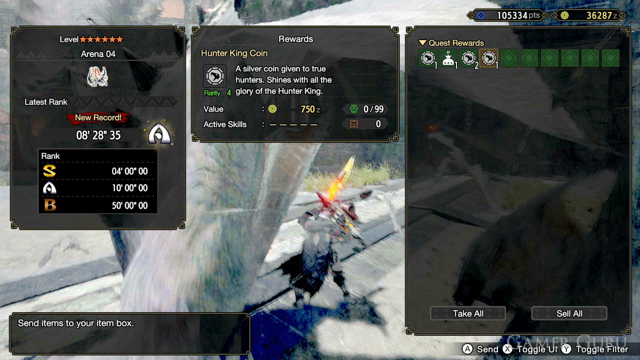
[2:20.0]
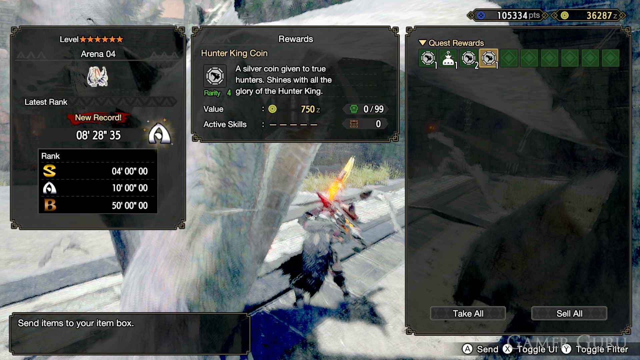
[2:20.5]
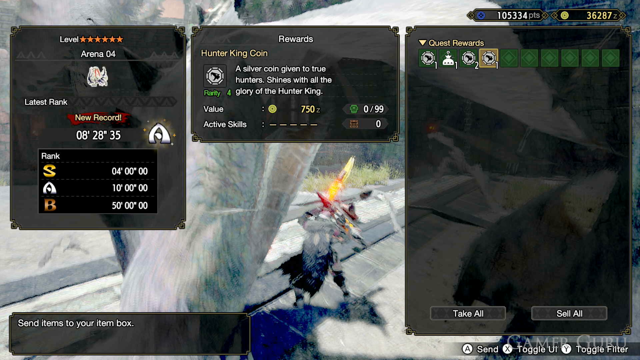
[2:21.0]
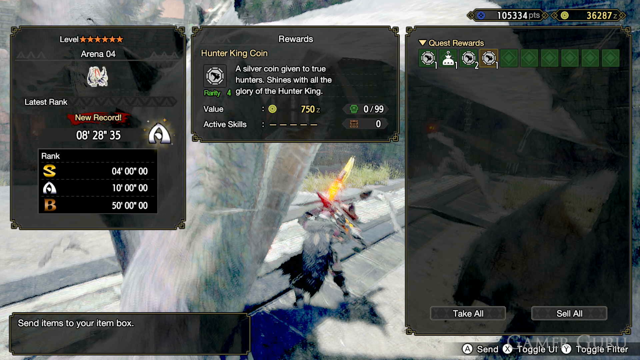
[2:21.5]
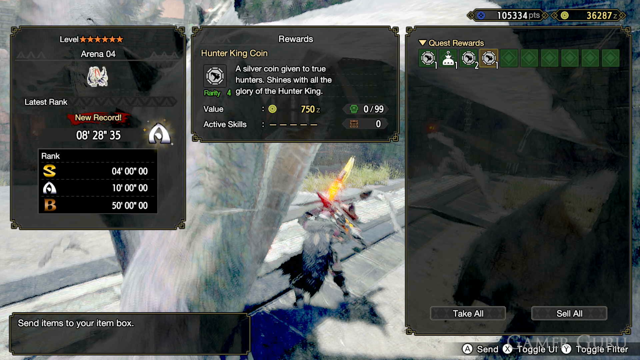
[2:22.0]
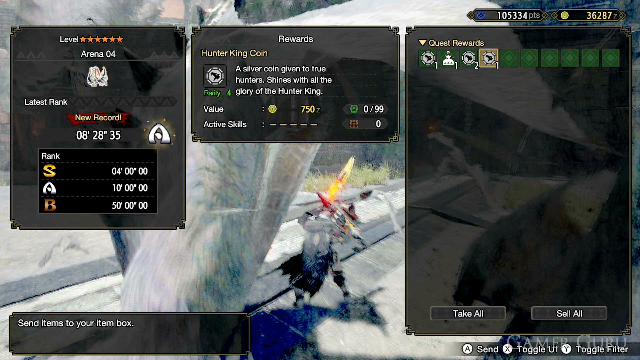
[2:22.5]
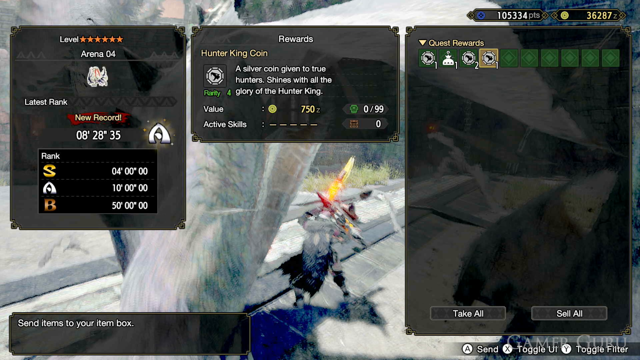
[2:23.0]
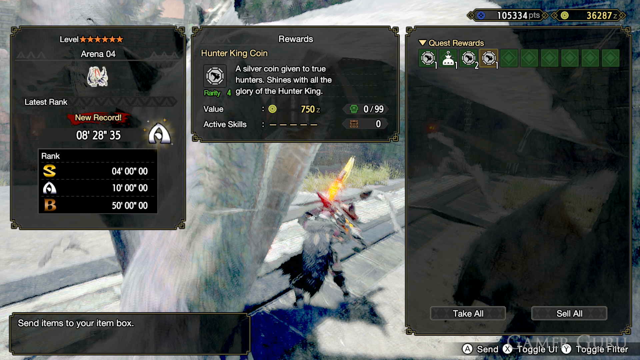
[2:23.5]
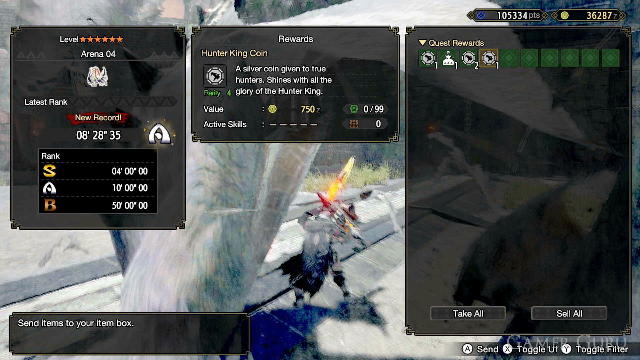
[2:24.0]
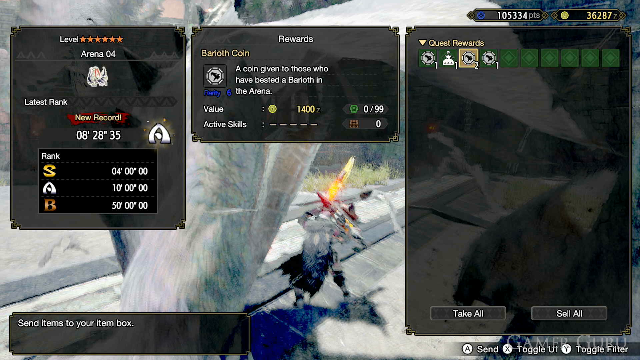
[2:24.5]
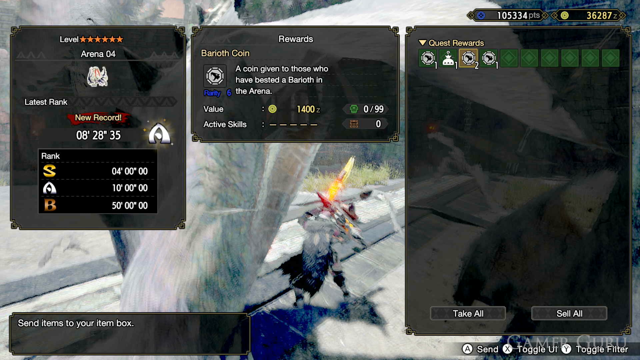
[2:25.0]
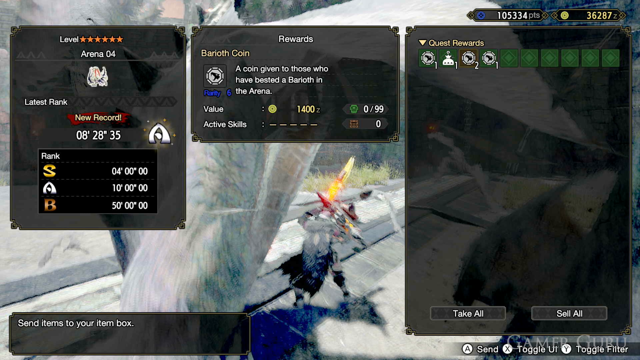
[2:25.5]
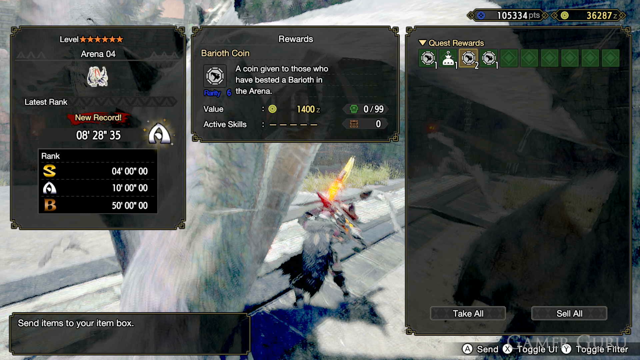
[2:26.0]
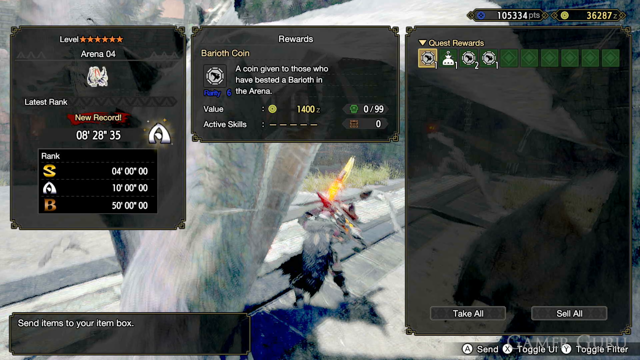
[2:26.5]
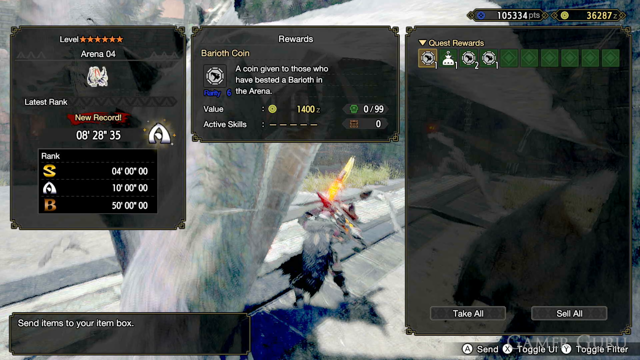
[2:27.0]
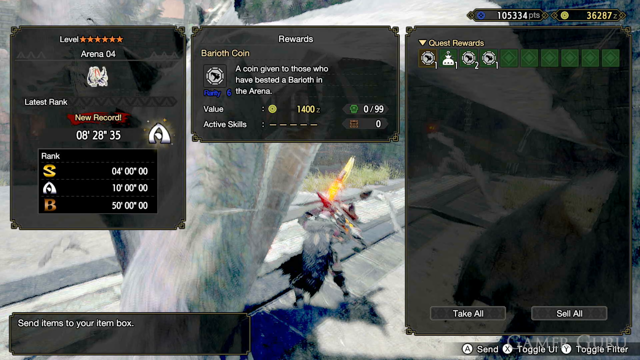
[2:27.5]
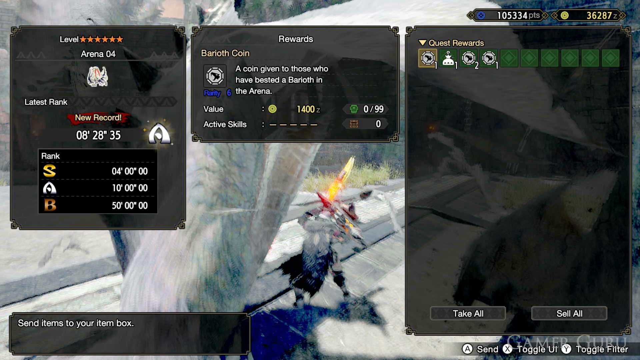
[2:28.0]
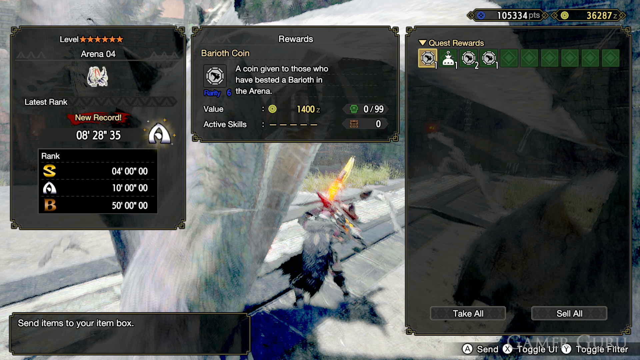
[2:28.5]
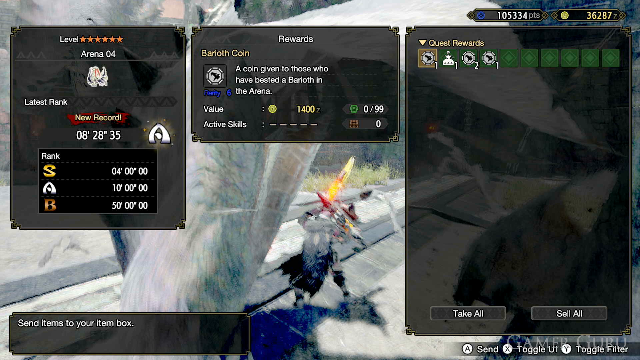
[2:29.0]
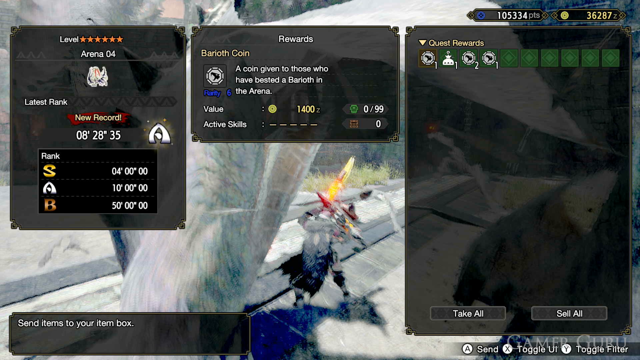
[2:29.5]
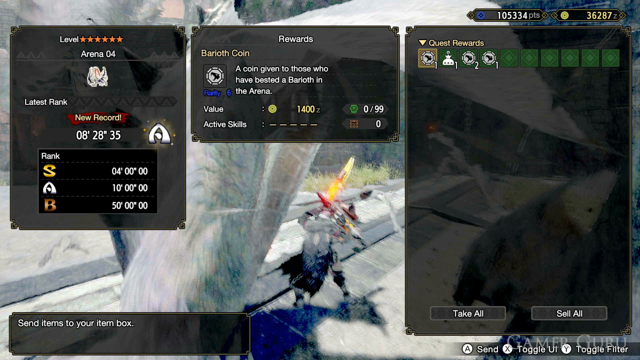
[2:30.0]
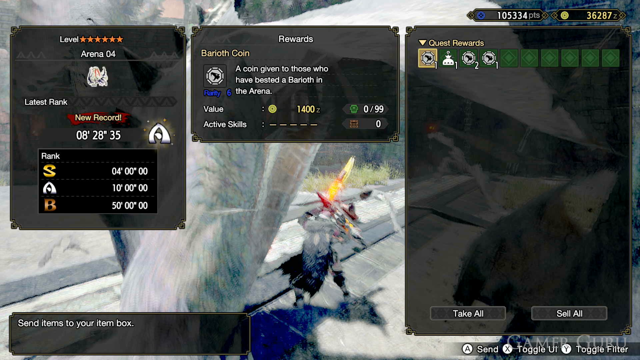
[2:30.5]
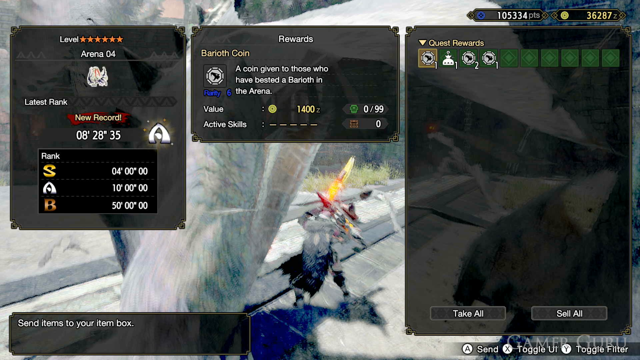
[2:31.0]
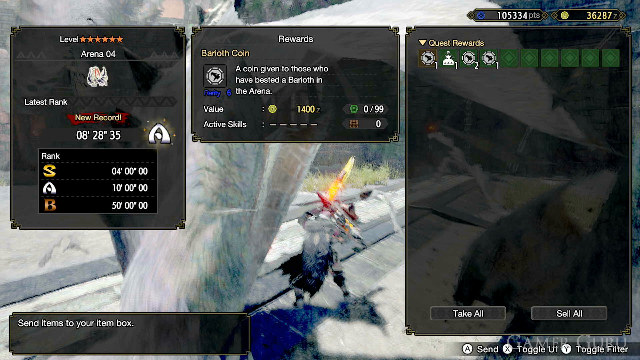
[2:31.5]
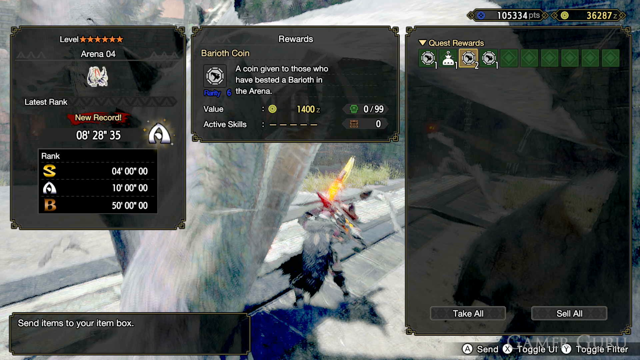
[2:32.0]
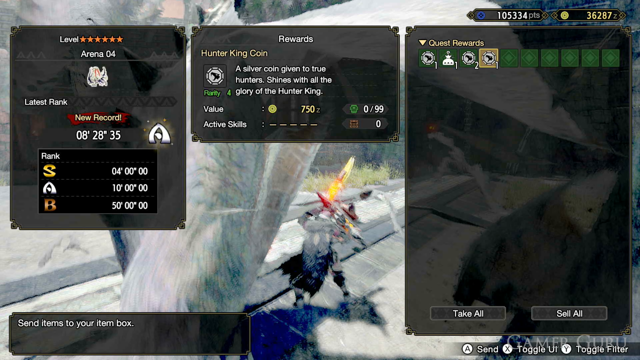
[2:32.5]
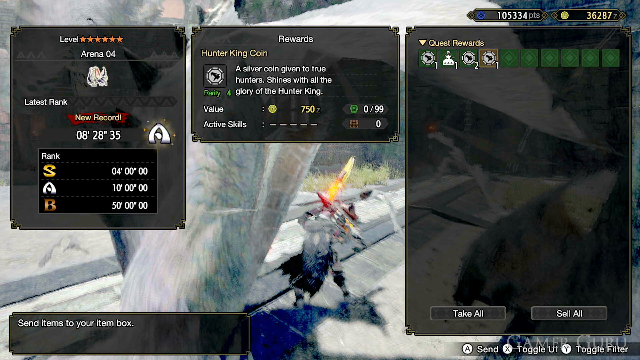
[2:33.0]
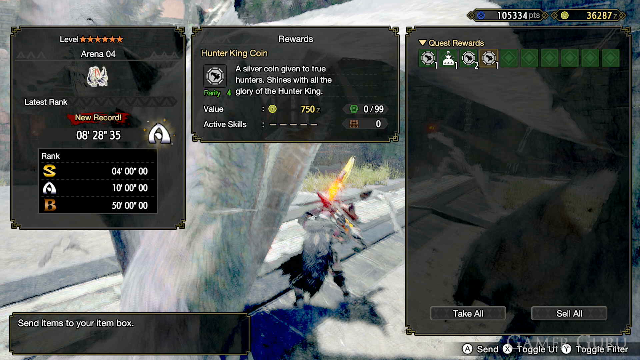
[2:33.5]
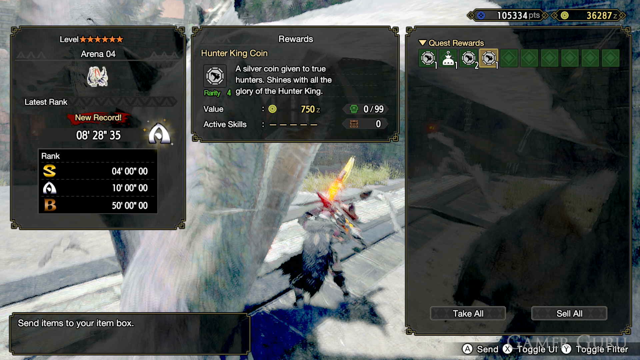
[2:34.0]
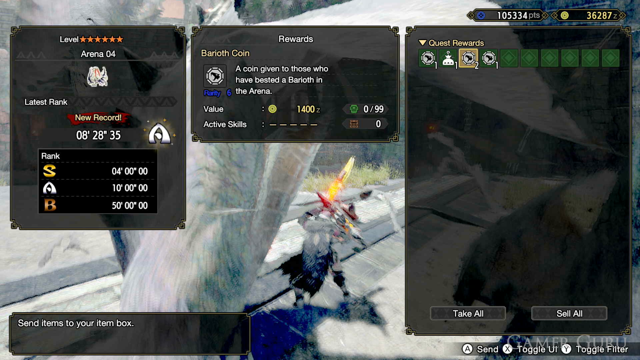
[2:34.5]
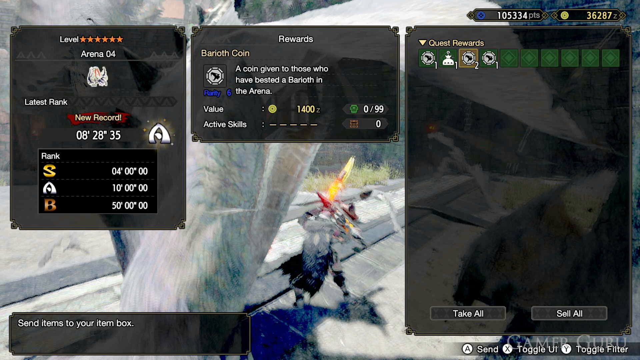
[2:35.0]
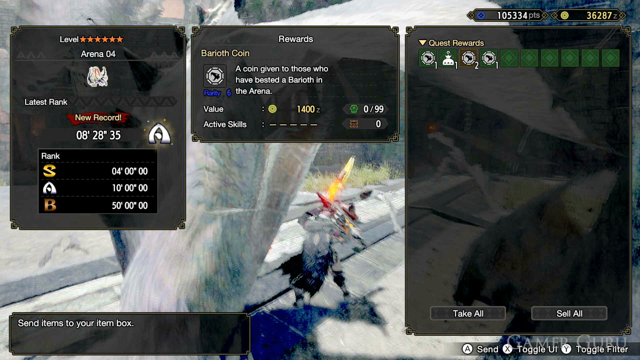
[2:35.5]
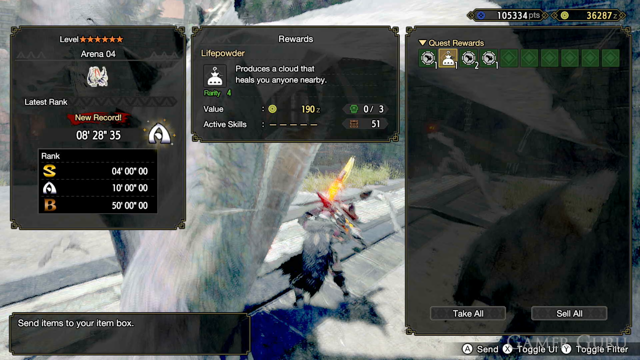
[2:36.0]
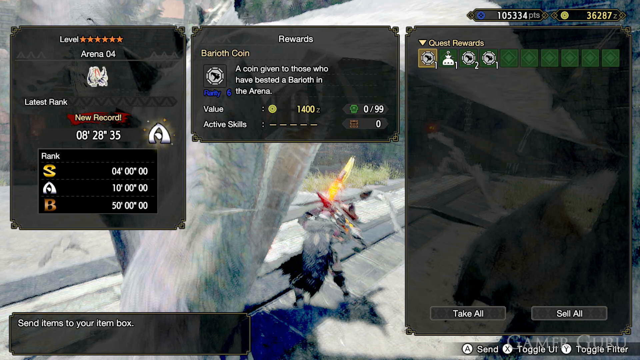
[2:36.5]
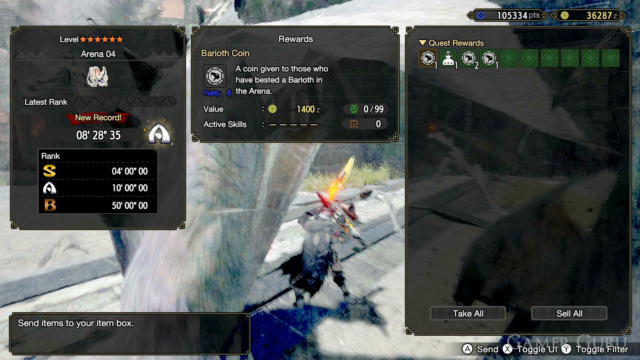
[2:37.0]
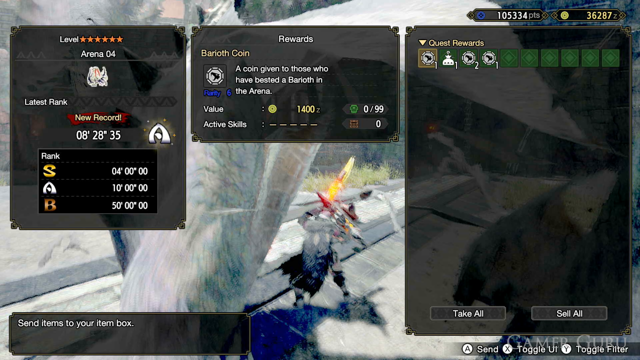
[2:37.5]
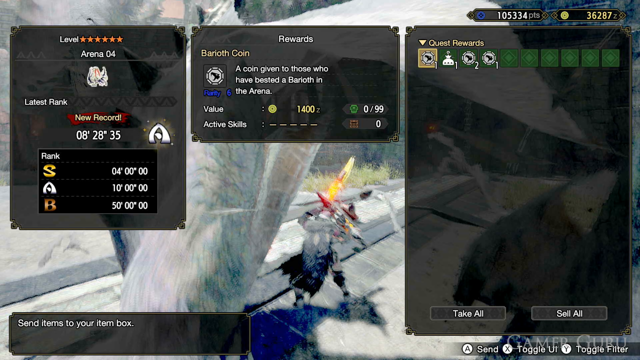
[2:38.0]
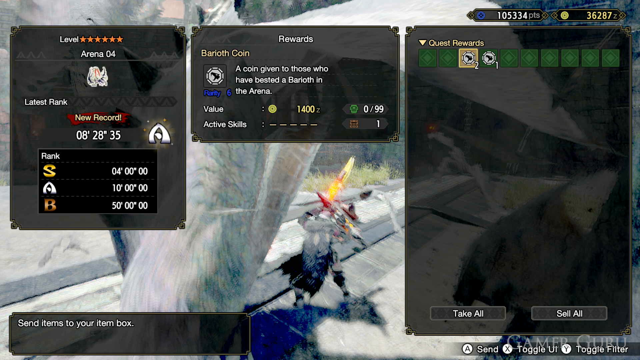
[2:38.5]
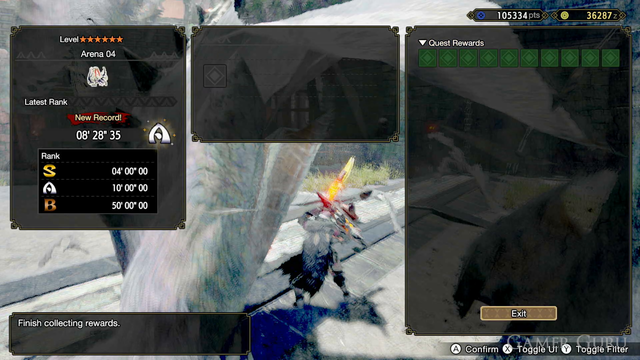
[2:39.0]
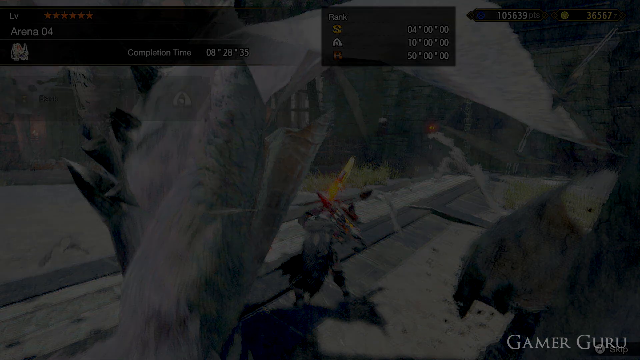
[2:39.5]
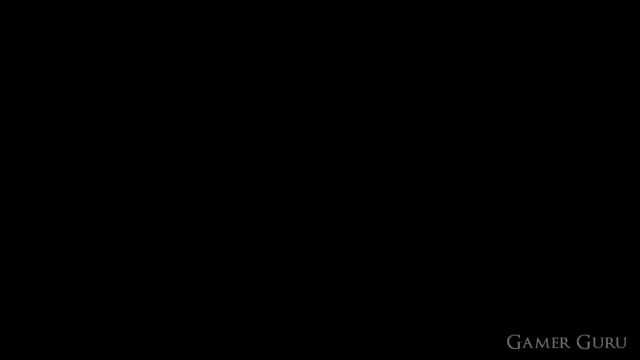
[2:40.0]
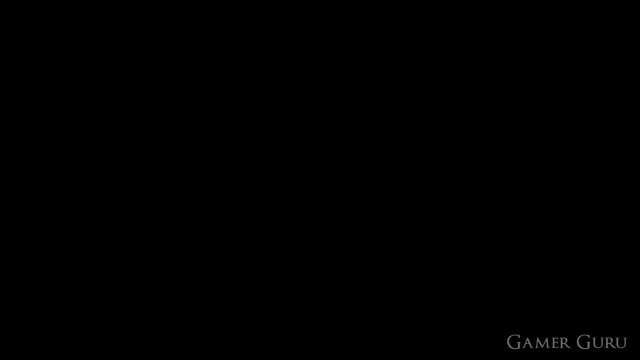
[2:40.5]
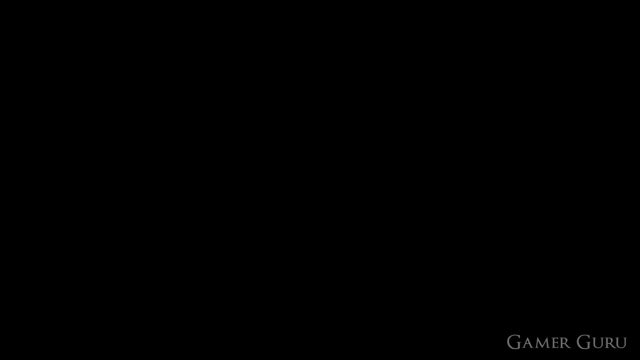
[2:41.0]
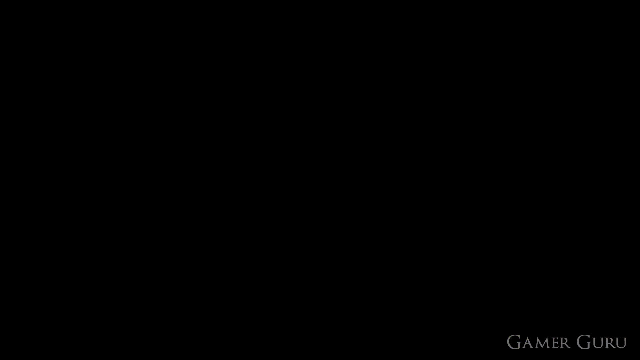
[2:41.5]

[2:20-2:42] A video game screen shows level six stars, arena 4, with a cartoonish icon, and latest rank "new record" 08 28 35. Rank S is 40000, A is 100000 and B is 500000. At the top middle, a Hunter King coin is the reward: "a silver coin given to true hunters shines with all the glory of the hunter king," rarity 4, value 750 Z, with "active skills" followed by five dashes. Icons described as quest rewards are shown. At the very top right it reads 105,334 points and 36,287 Z, presumably the in-game currency.